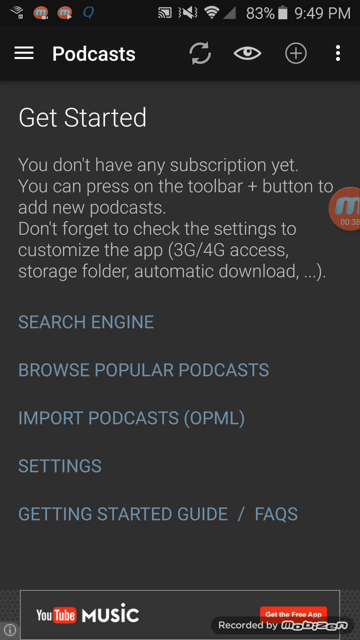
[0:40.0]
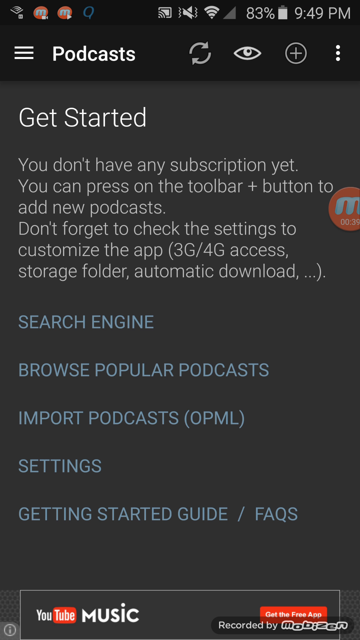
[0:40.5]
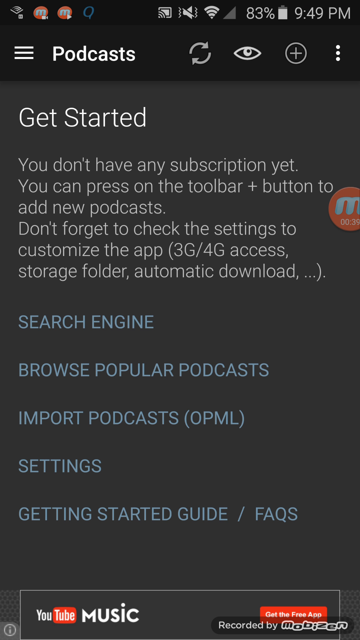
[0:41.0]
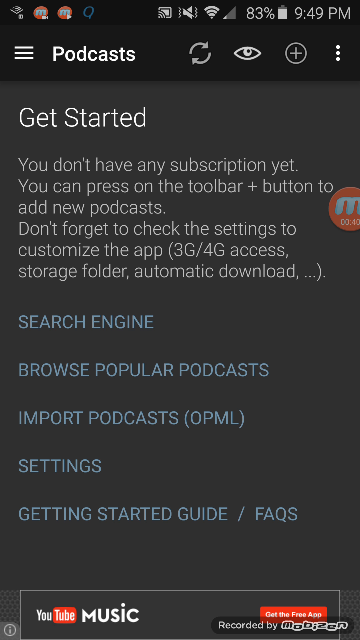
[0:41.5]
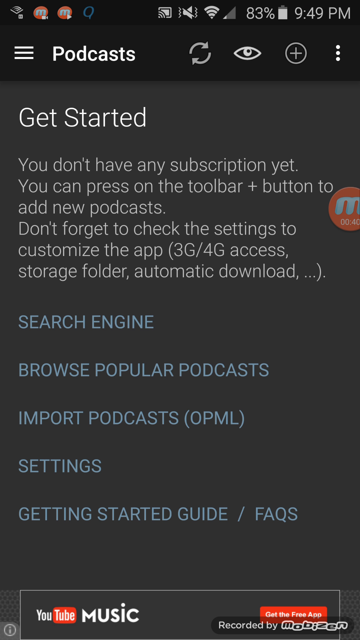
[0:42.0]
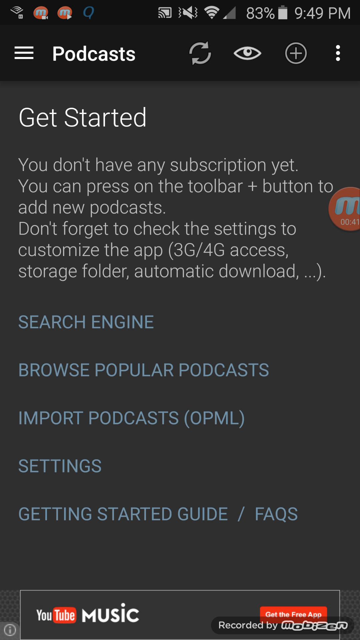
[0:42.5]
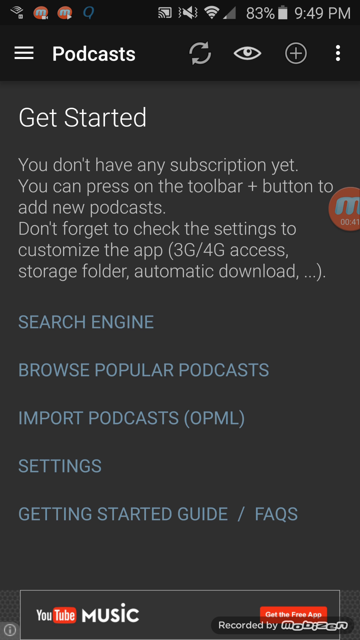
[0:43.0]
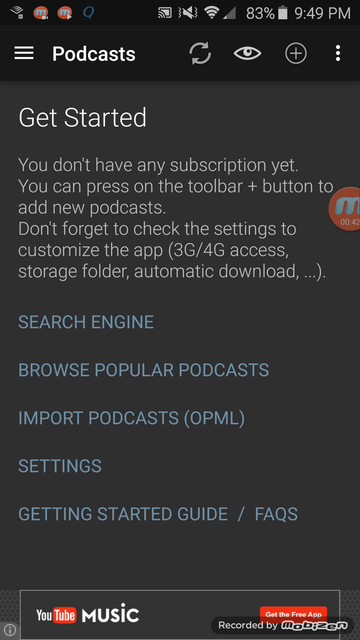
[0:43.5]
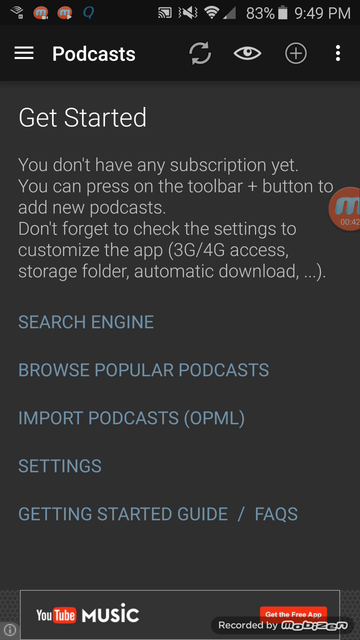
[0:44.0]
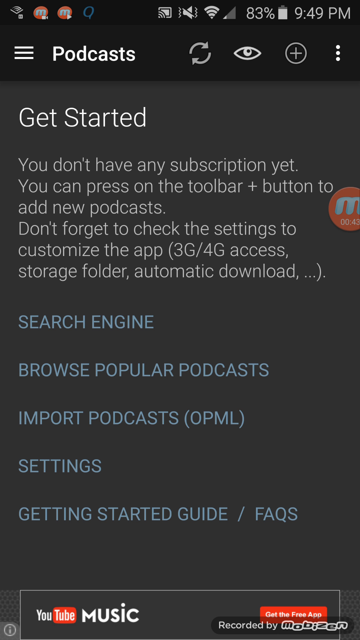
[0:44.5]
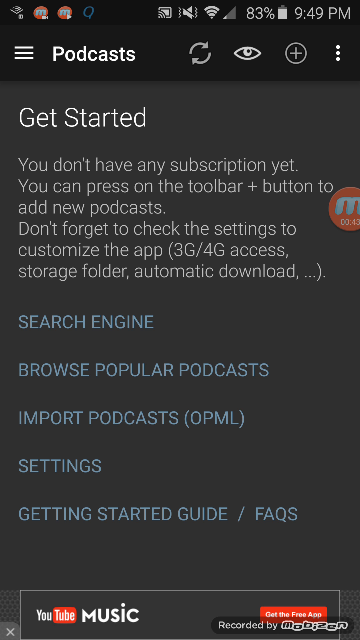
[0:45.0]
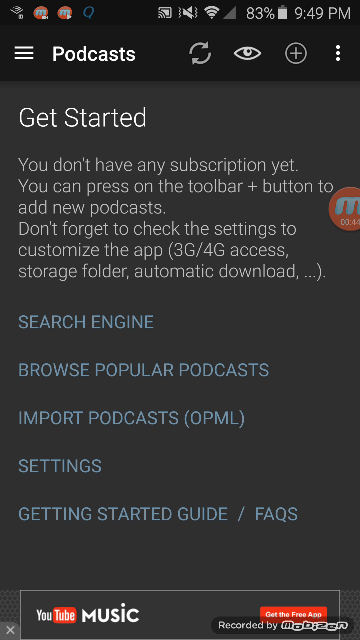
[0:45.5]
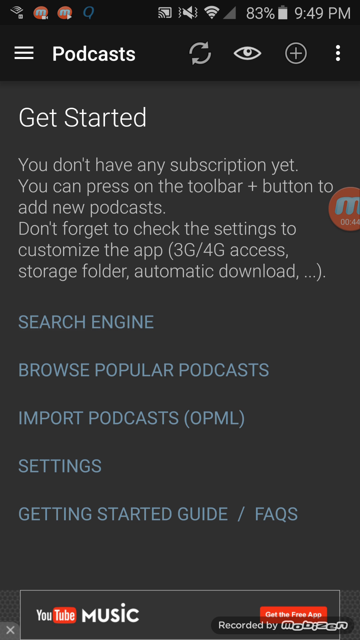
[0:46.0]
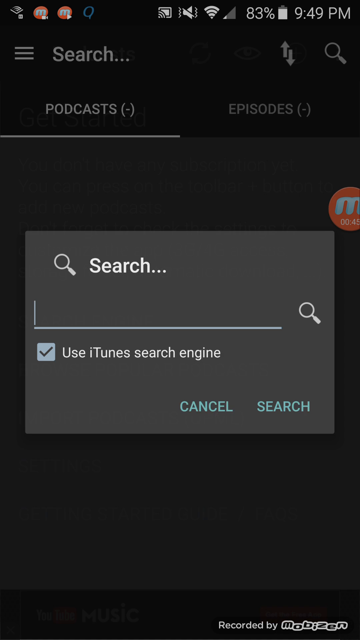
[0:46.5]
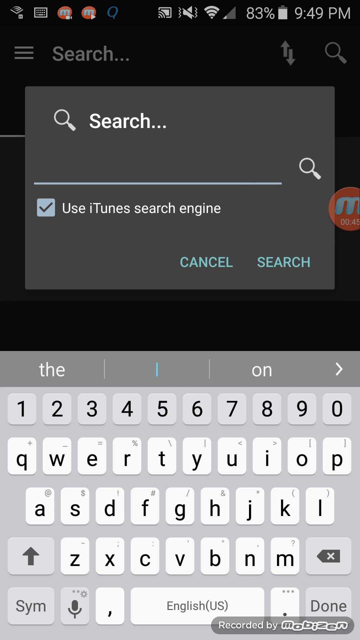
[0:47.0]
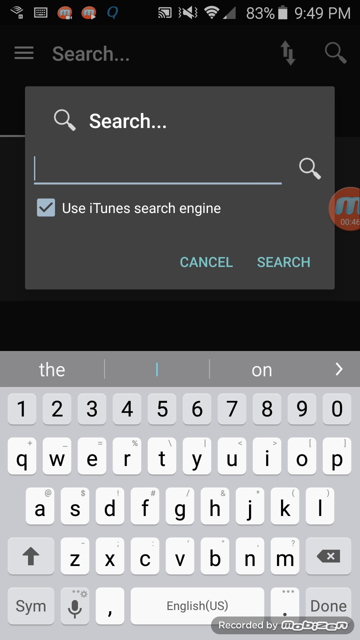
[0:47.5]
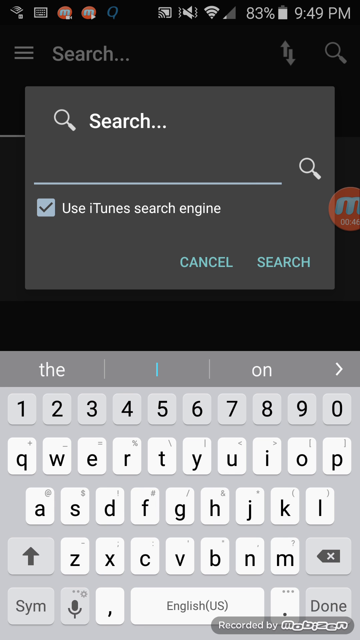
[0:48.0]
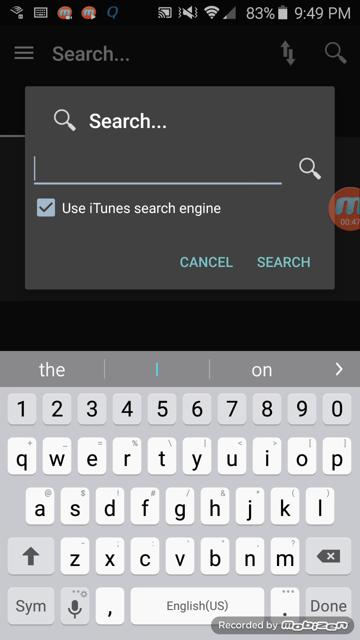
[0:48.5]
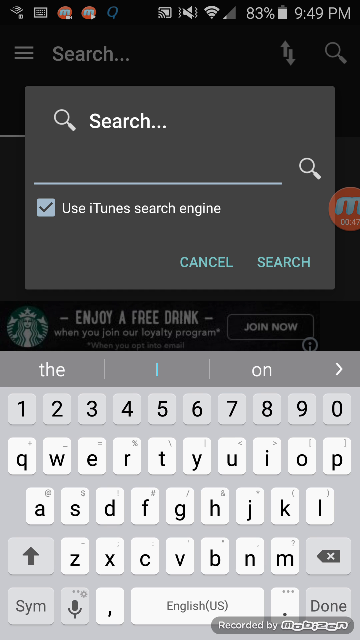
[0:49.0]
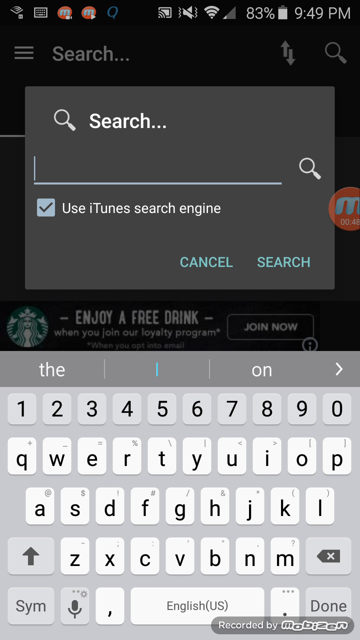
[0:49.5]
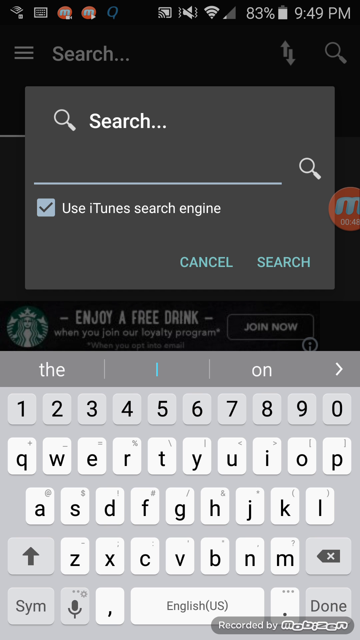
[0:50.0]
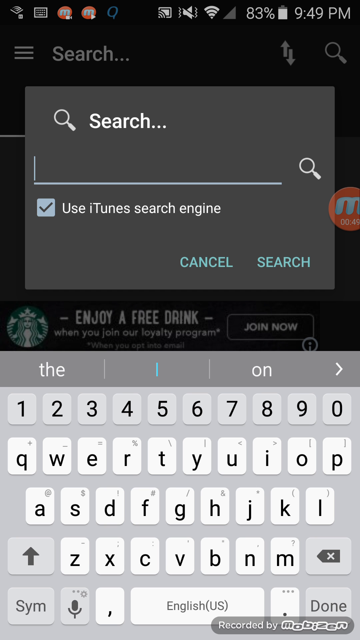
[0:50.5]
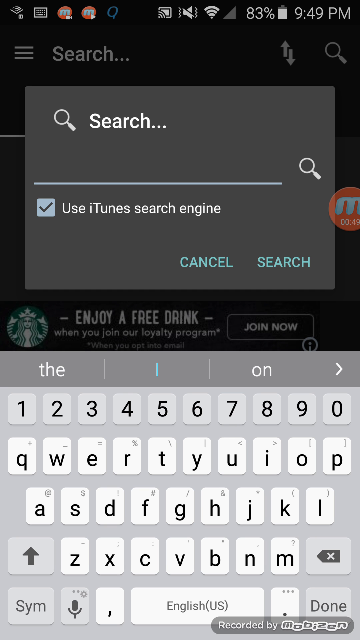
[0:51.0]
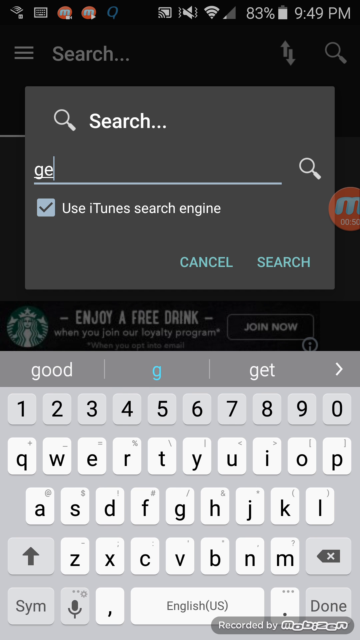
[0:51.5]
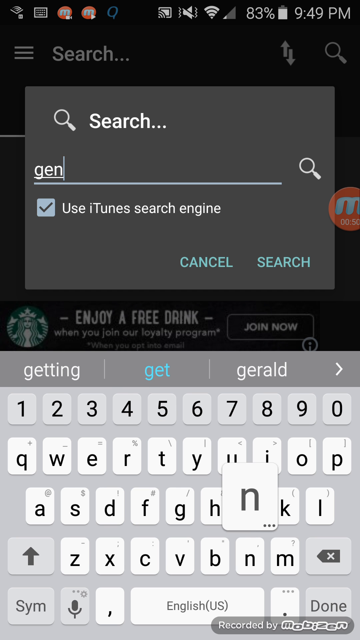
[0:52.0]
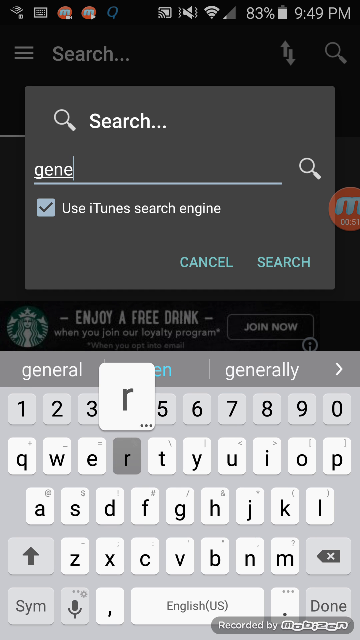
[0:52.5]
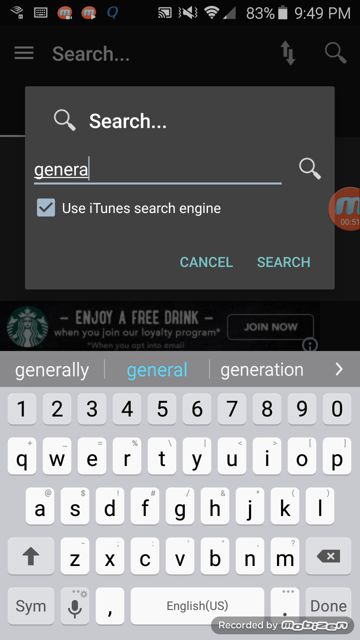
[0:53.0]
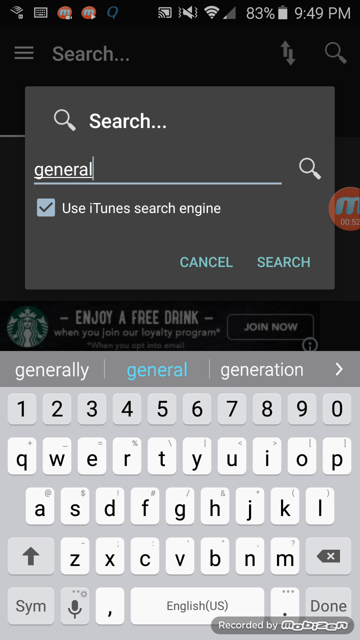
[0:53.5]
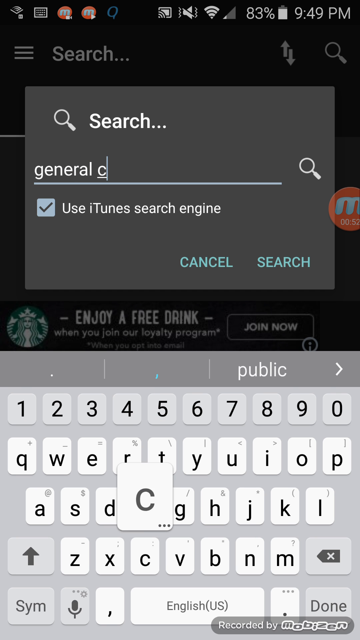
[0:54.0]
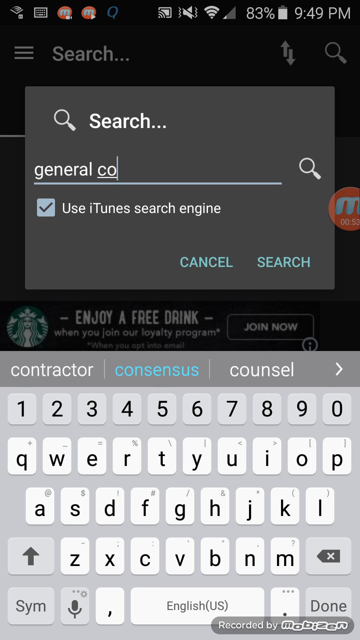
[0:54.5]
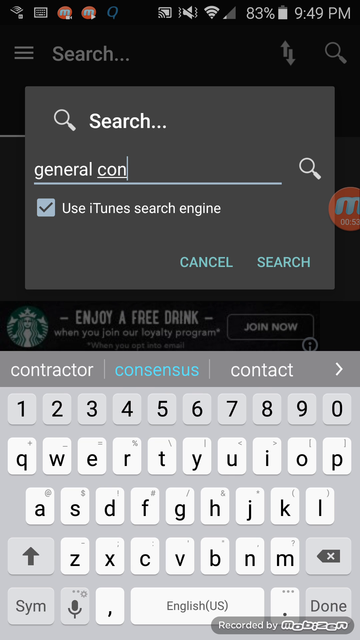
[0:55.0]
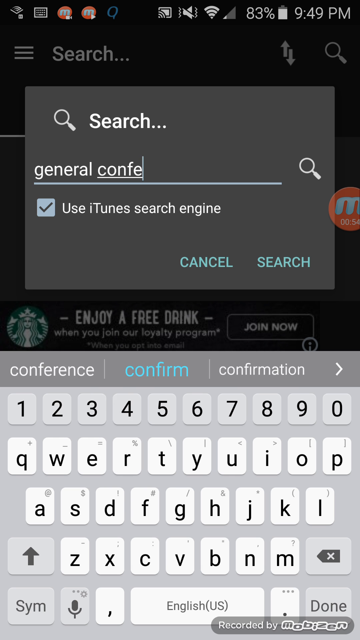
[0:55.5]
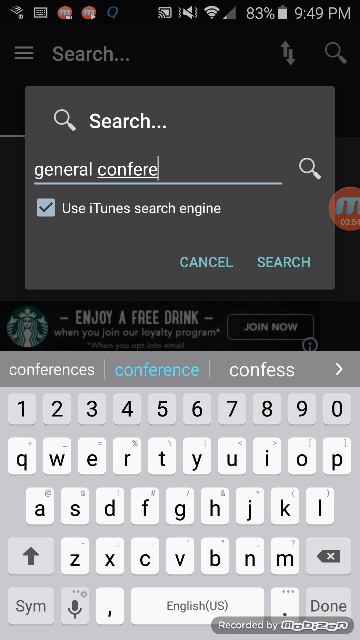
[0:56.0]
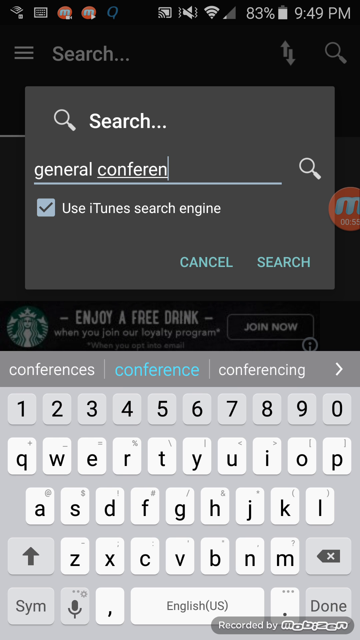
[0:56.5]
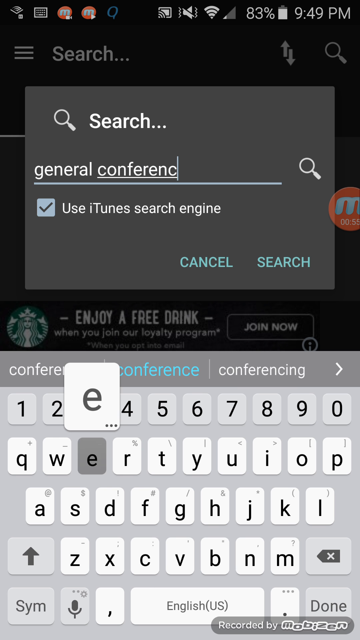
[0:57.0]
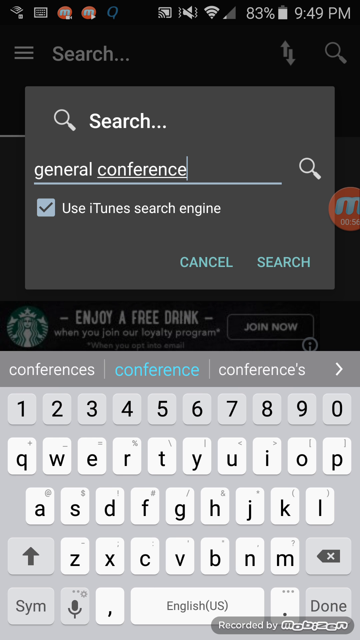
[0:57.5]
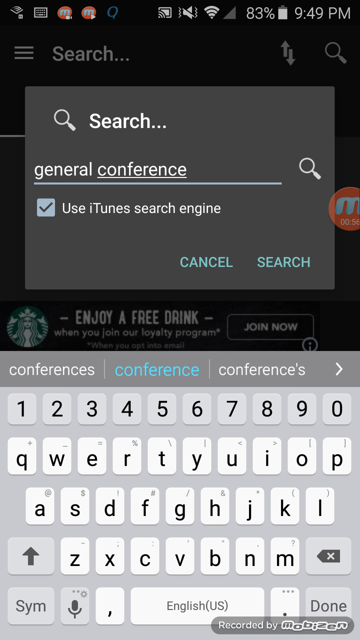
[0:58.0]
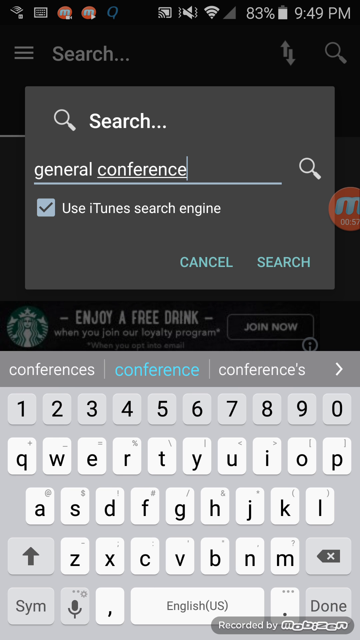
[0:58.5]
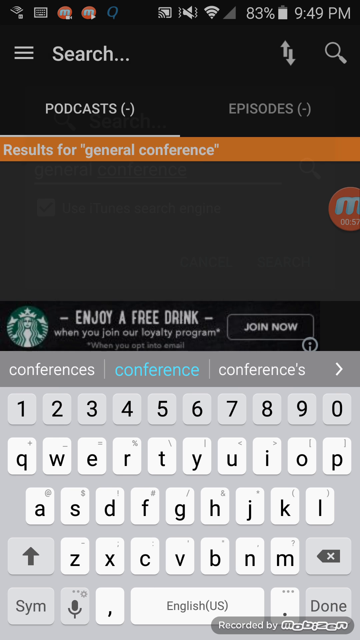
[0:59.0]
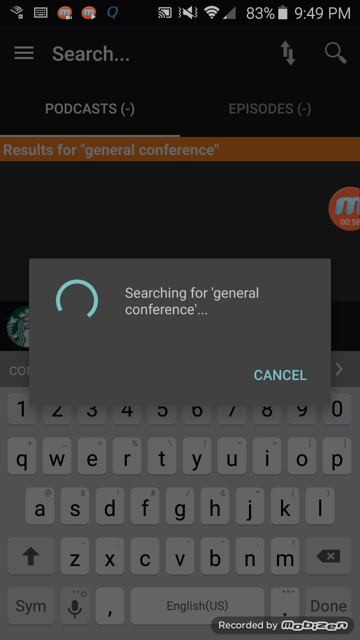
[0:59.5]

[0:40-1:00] A page of settings appears on the smartphone, apparently following the podcast search; it is a page in the Google Play Store titled "Get Started". It reads "you don't have any subscription yet. You can press on the toolbar plus button to add new podcasts. Don't forget to check the settings to customize the app." Options listed include 3G and 4G access, storage folder, and automatic download, along with a search engine, "Browse Popular Podcasts", "Import Podcasts", a Settings button, and "Getting Started Guide / Facts". The exact page is unclear. Across the top is a hamburger menu on the left, with "Podcasts" to its right, then a Refresh button, an icon with an eye that could be a search button, a plus button, and at the far right a three-dot menu button with the dots arranged vertically.